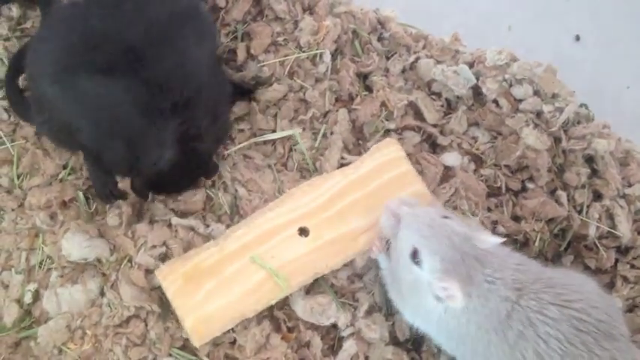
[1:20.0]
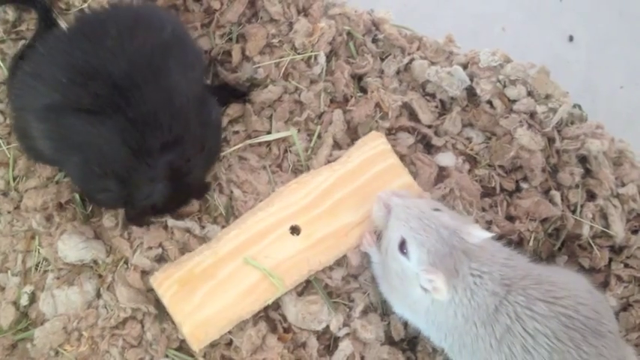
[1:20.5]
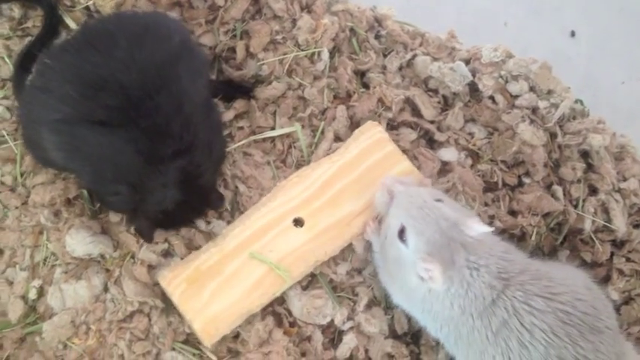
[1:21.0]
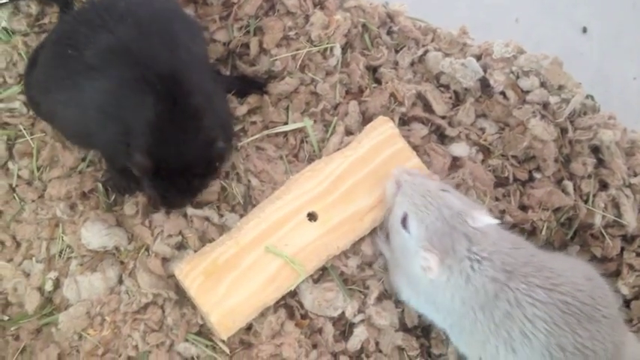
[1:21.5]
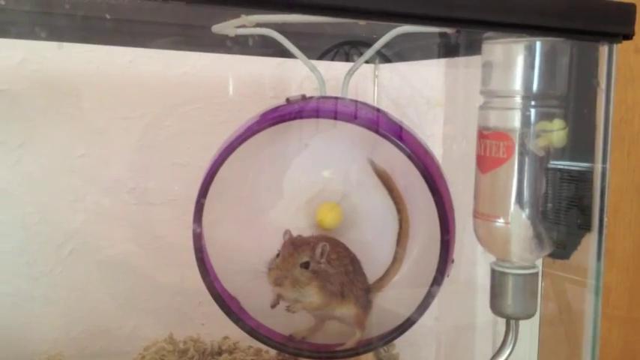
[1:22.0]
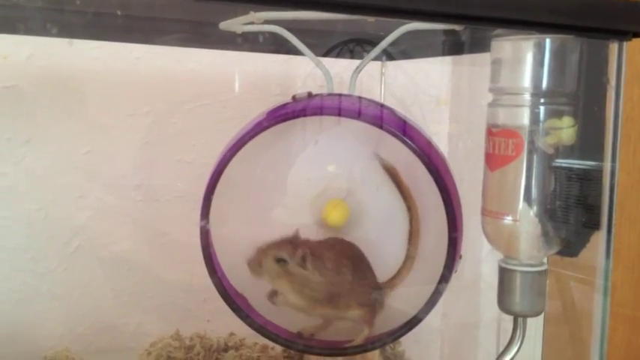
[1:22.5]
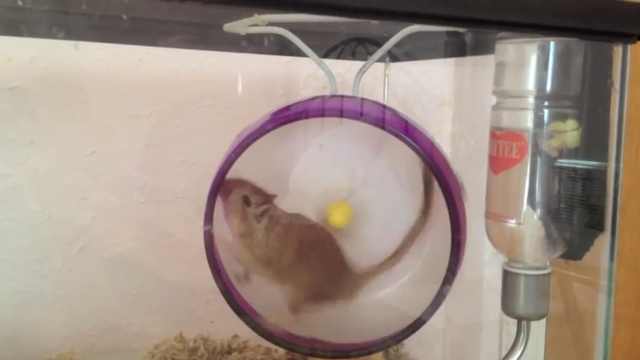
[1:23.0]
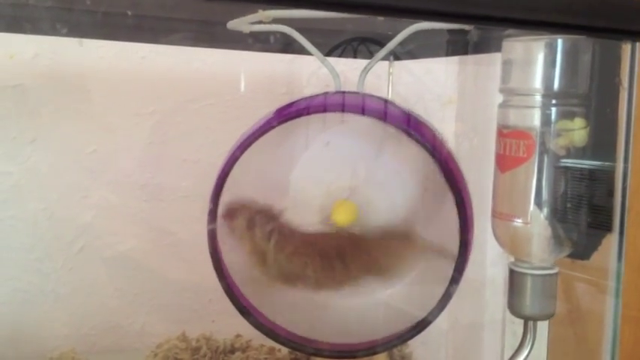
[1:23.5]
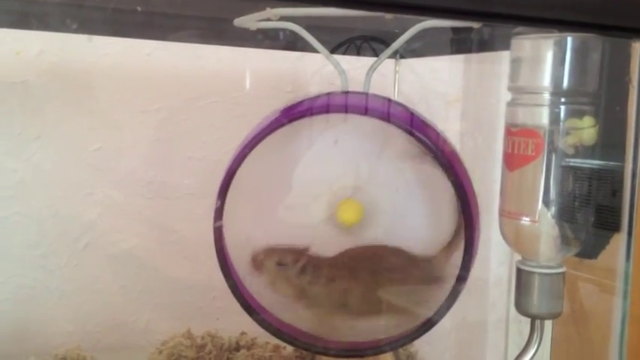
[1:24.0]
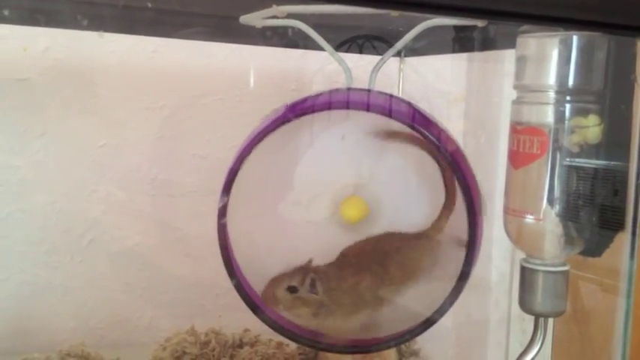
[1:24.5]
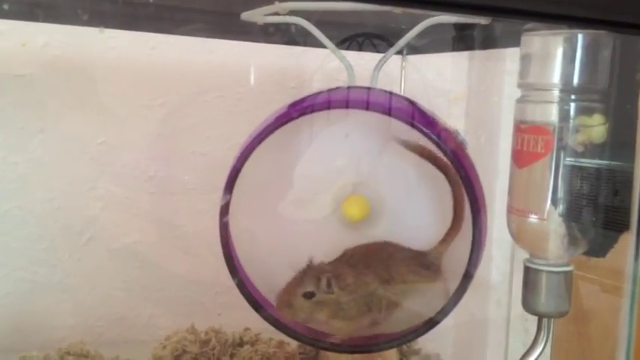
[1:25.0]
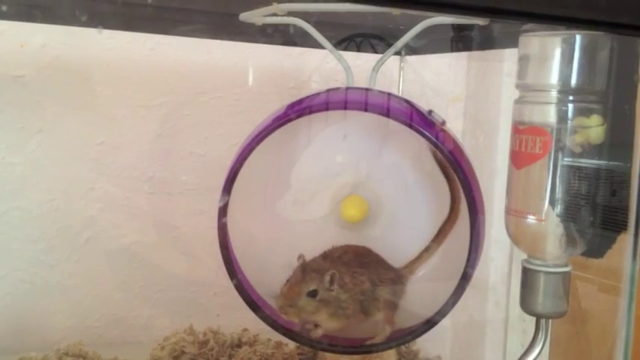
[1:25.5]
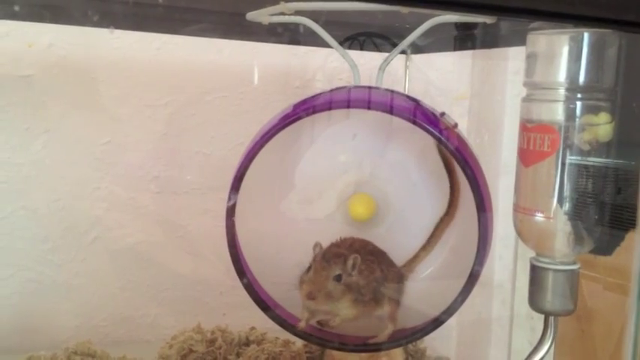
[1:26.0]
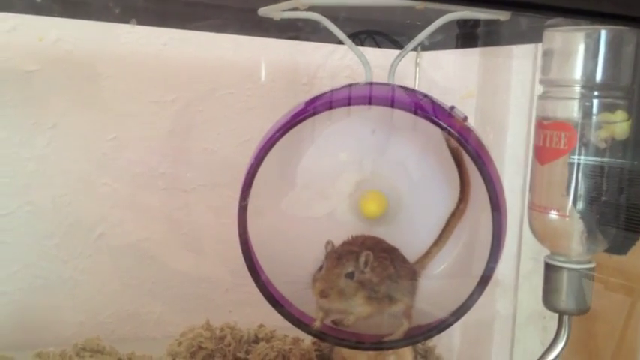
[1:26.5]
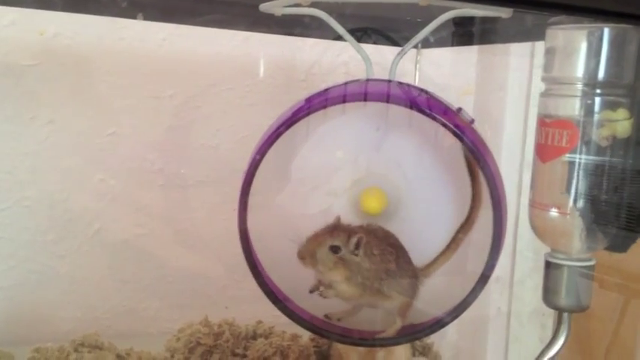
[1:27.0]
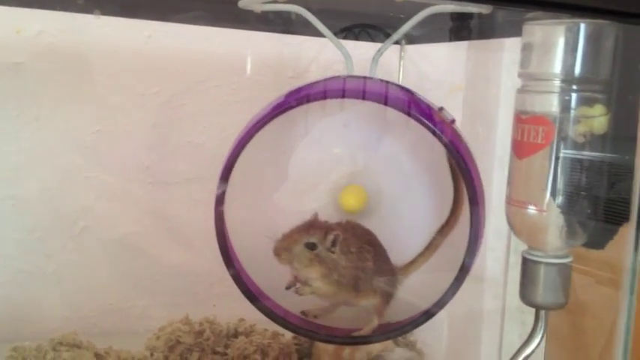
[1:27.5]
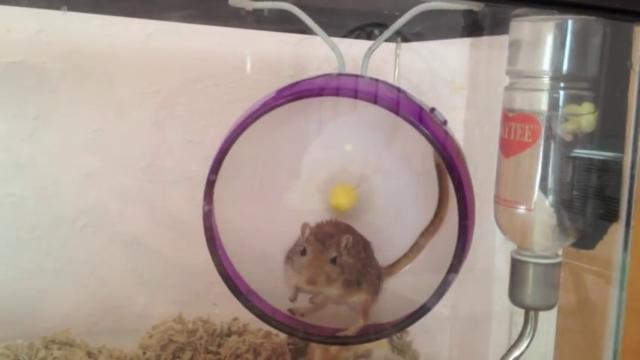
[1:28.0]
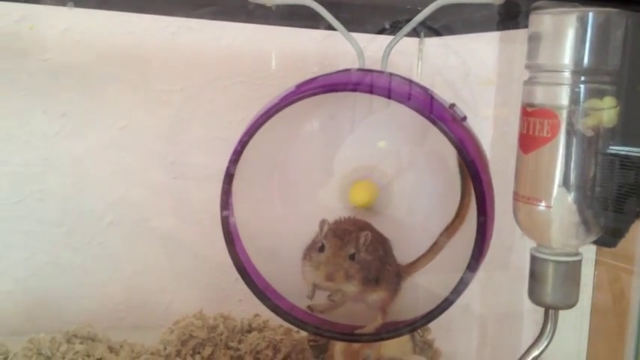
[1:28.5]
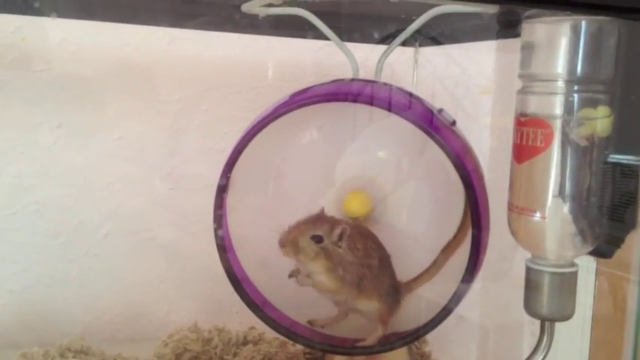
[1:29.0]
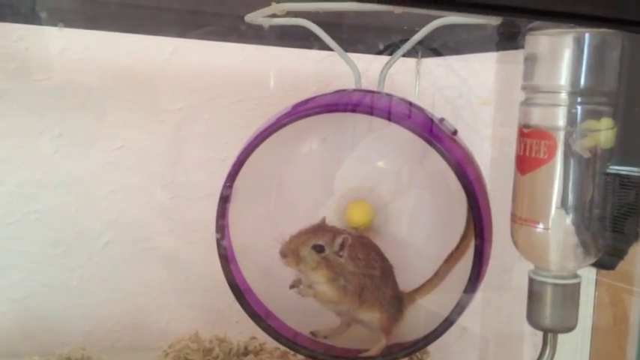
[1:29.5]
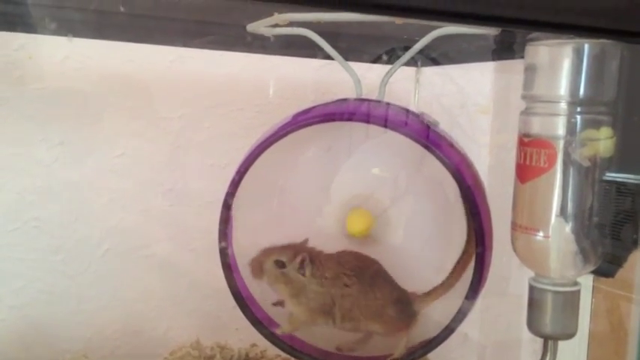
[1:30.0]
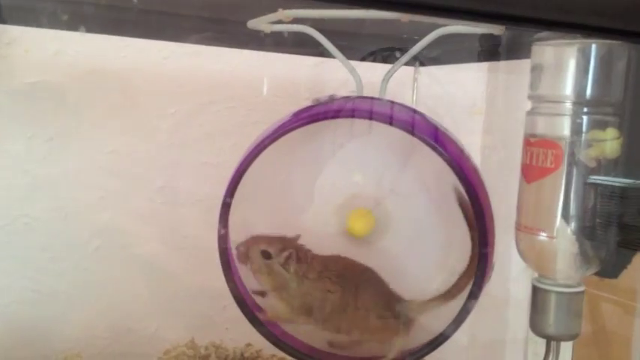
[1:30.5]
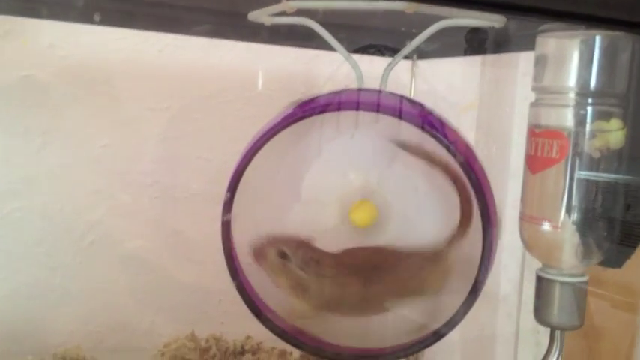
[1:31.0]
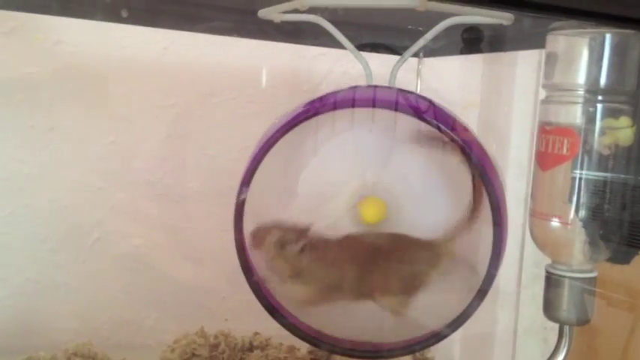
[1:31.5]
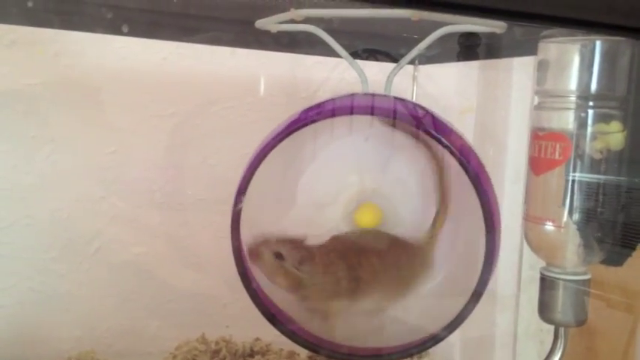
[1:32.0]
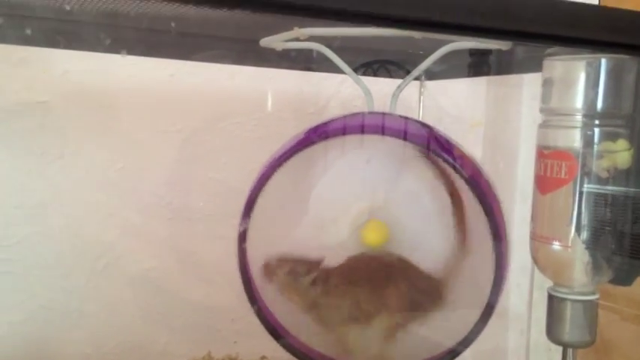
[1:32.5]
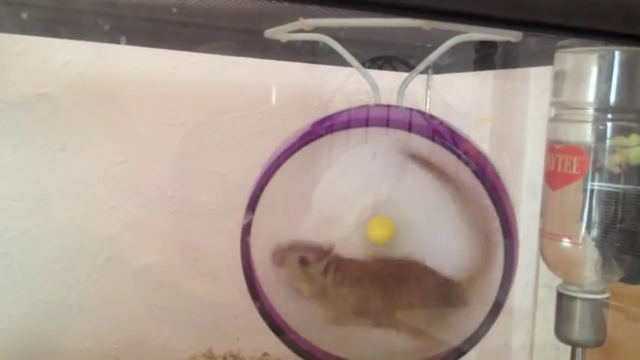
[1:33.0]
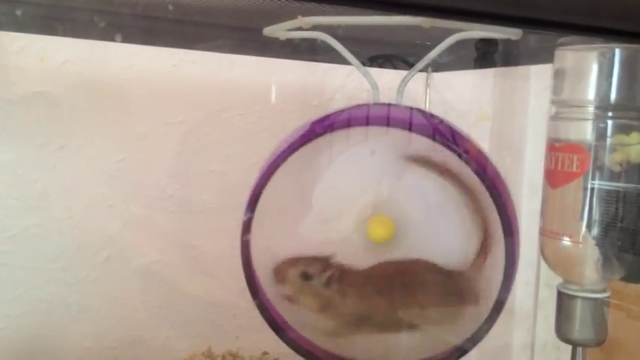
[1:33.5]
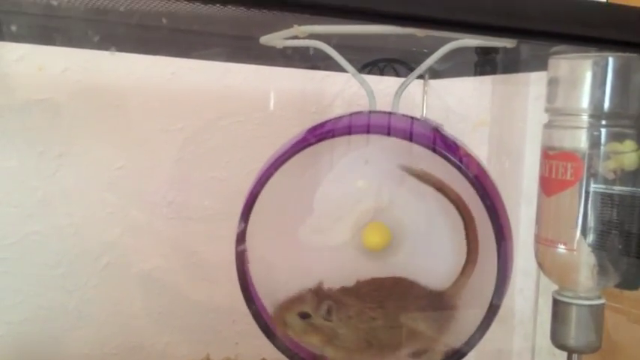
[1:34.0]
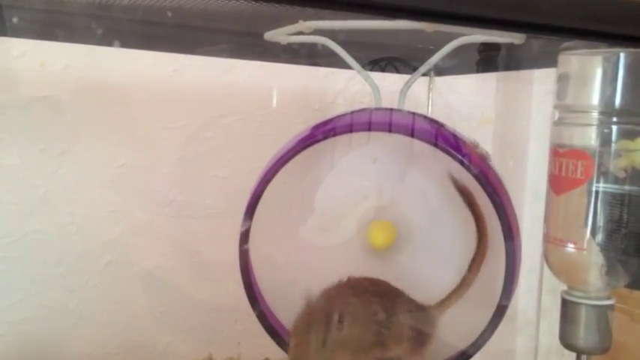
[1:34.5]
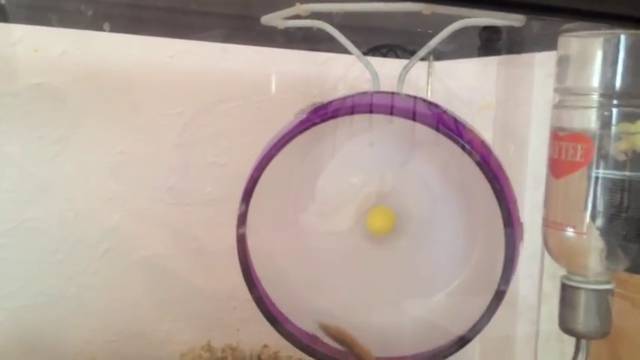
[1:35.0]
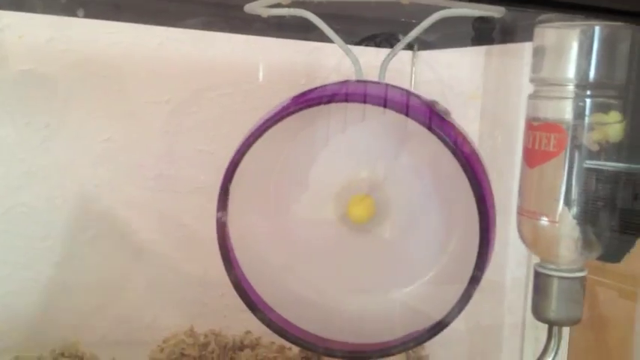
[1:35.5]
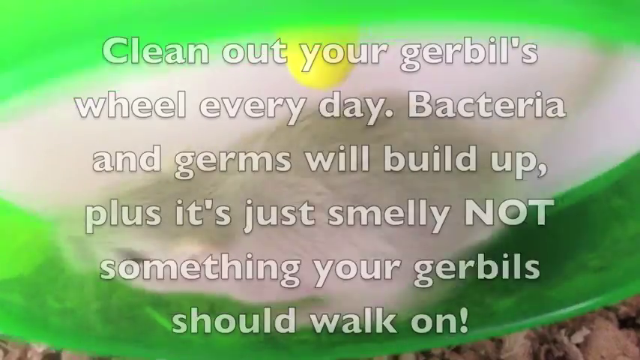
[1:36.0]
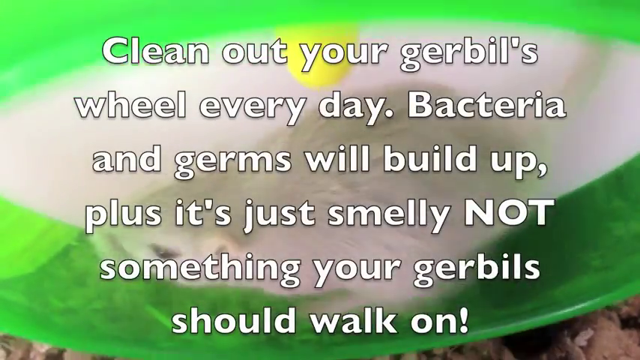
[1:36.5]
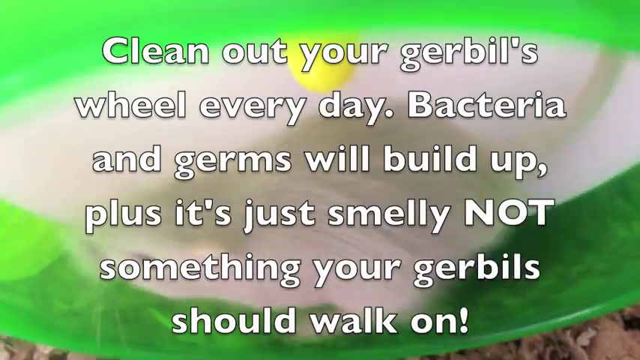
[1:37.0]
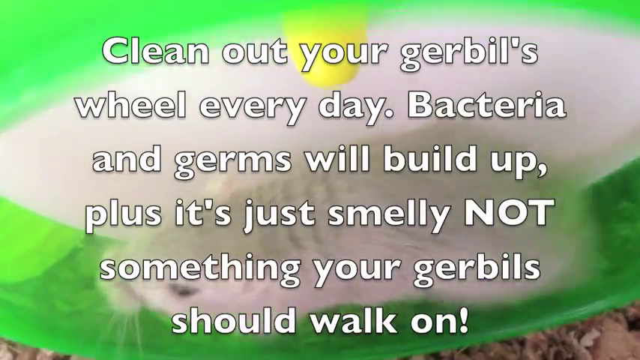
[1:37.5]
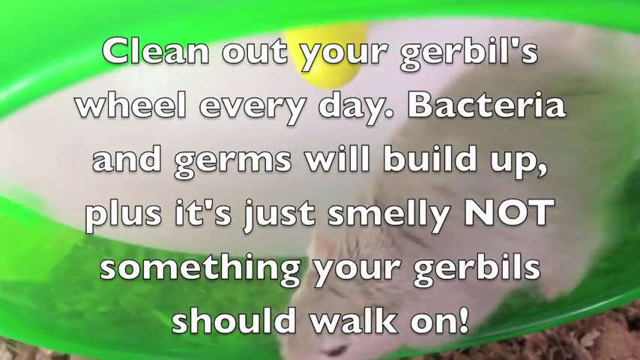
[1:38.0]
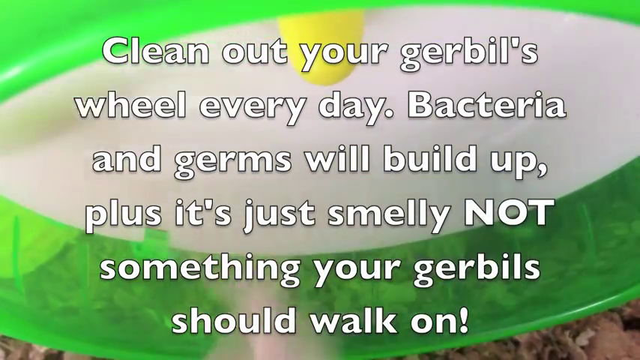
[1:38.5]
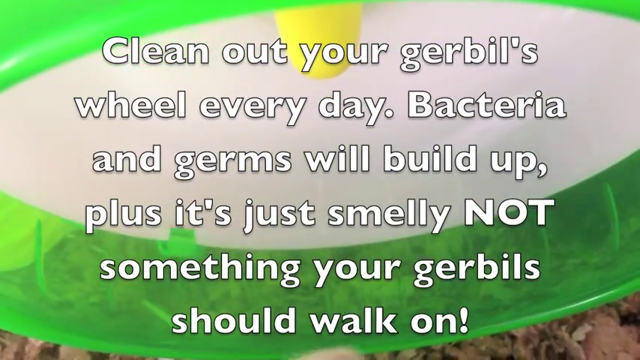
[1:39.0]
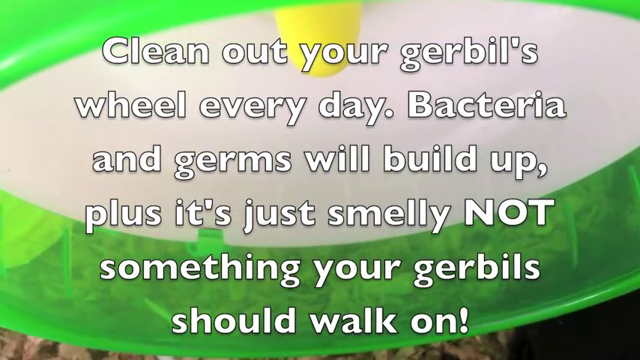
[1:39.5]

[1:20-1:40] The black gerbil is still grooming itself while the grey one gnaws at the piece of wood. The video cuts to a different, light brown gerbil inside a purple and white gerbil wheel that is inside a glass enclosure. To the right of the enclosure is a large water bottle with a stainless steel metal spout. The gerbil runs rapidly, then stops, turns to look at the camera and stands on its hind legs before starting to run again; as it runs, its tail is curved over the top of its head. It then leaves the wheel. Next, a grey gerbil is inside a gerbil wheel, running extremely fast, and writing appears on the screen: "clean out your gerbil's wheel every day. Bacteria and germs will build up. Plus it's just smelly, not something your gerbils should walk on." In the background, the gerbil leaves the wheel and drops down.